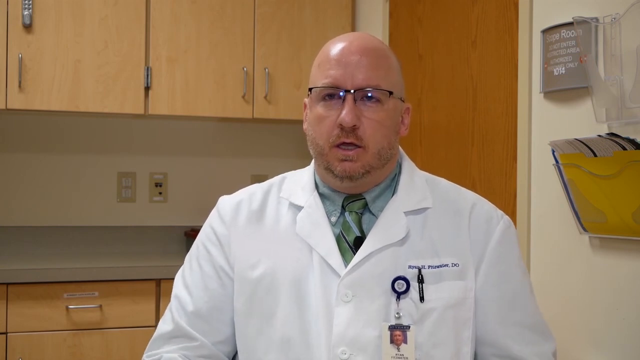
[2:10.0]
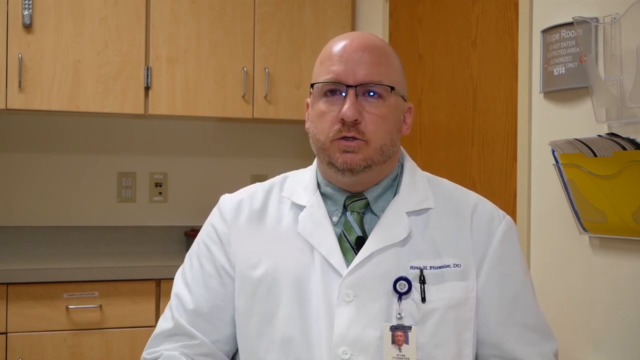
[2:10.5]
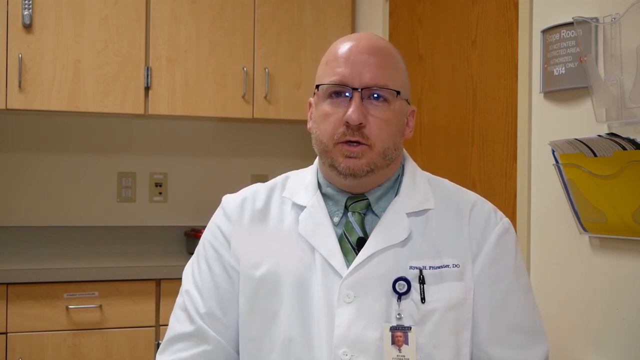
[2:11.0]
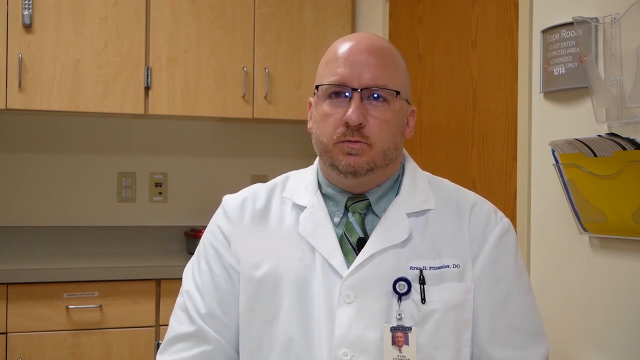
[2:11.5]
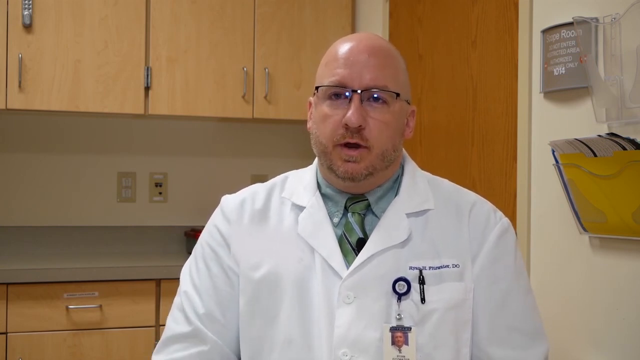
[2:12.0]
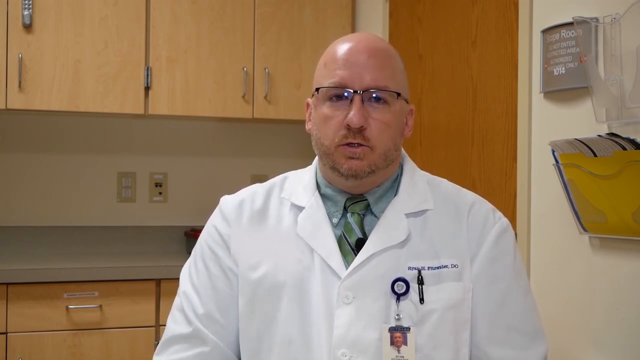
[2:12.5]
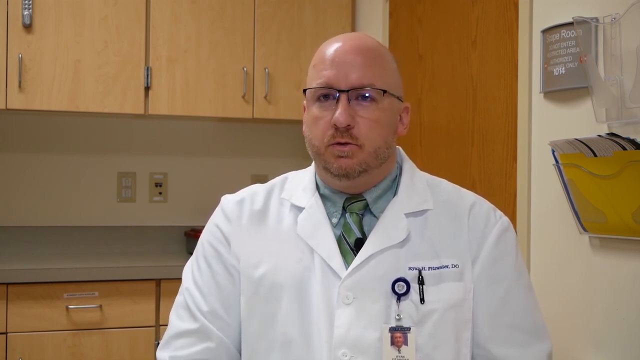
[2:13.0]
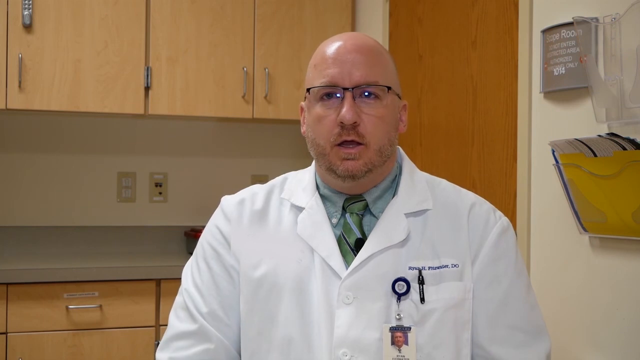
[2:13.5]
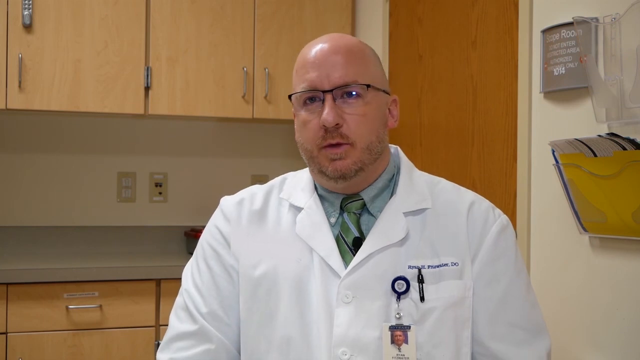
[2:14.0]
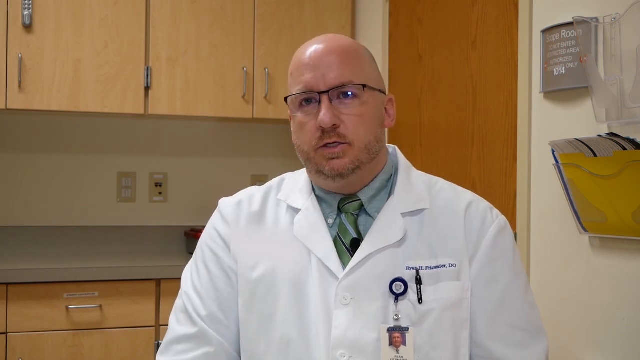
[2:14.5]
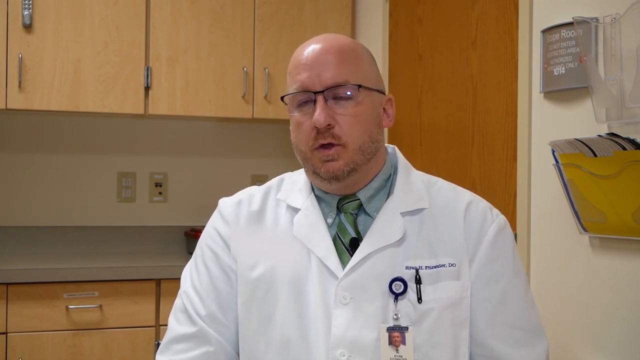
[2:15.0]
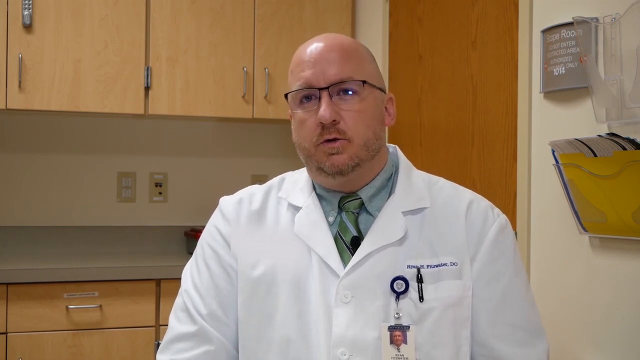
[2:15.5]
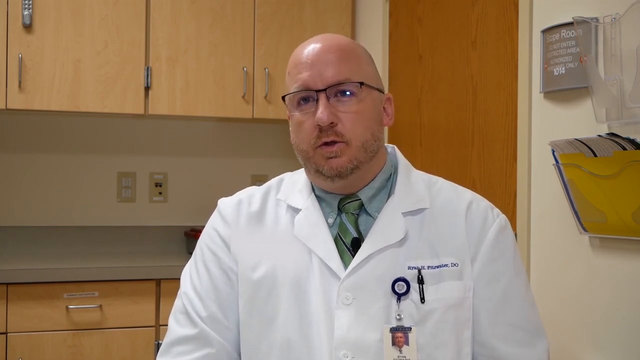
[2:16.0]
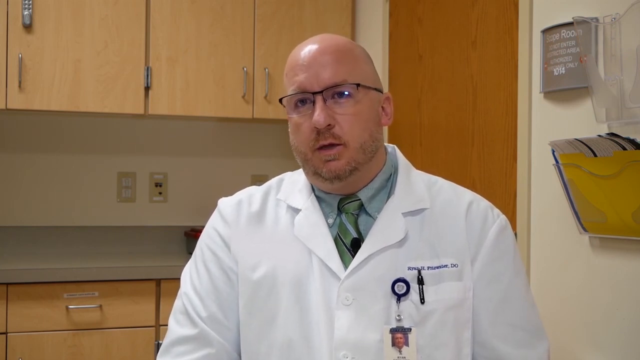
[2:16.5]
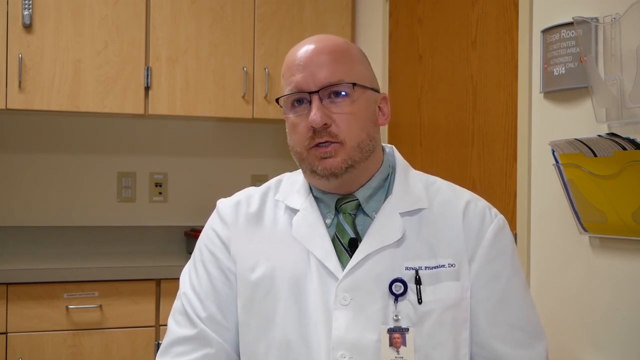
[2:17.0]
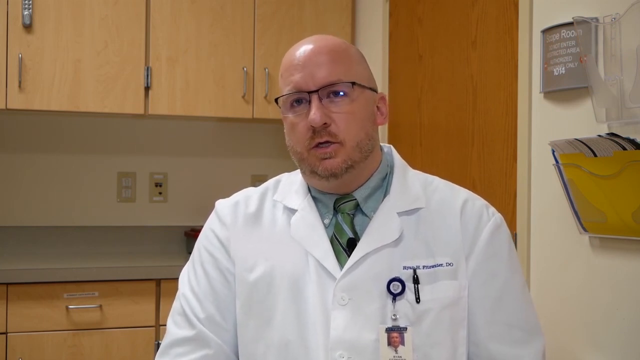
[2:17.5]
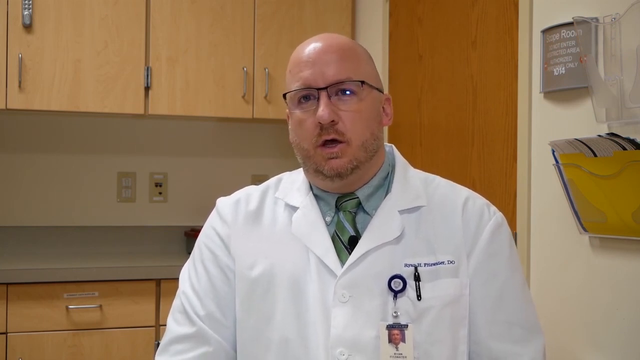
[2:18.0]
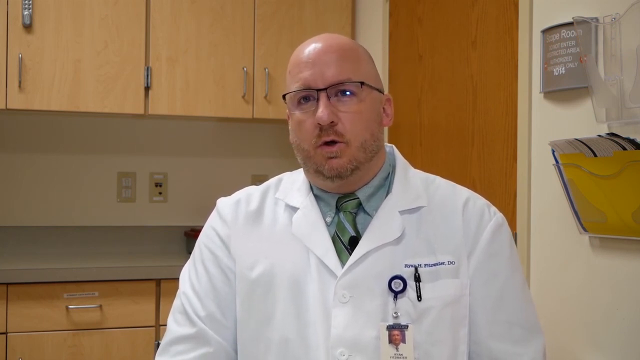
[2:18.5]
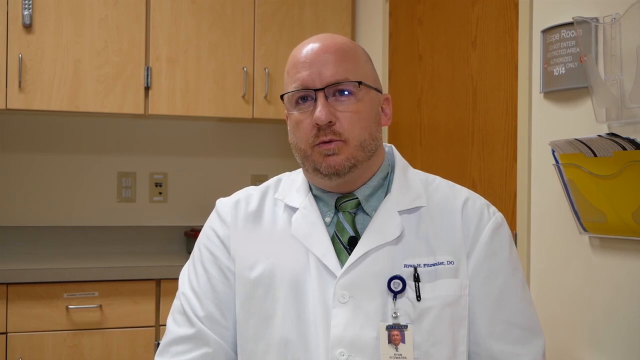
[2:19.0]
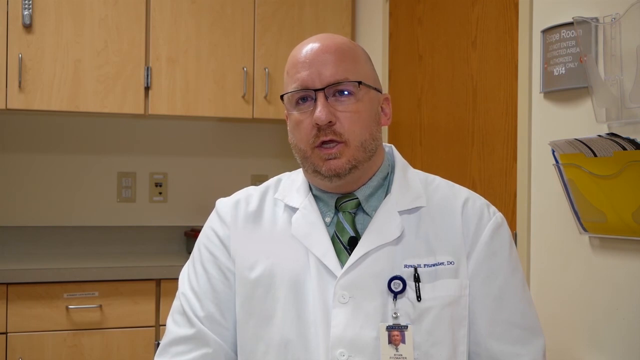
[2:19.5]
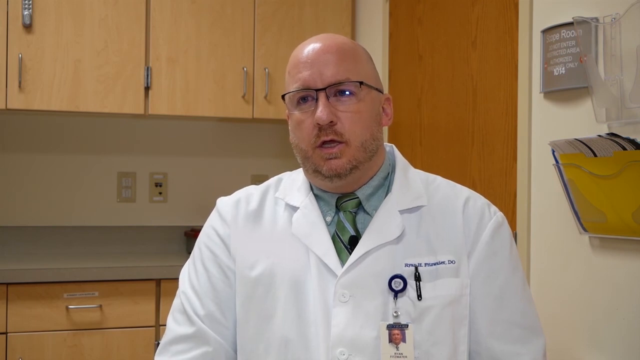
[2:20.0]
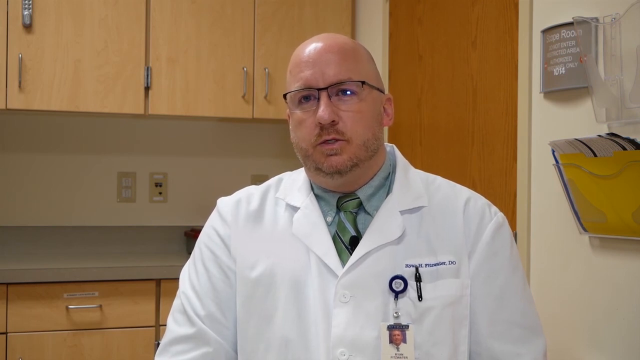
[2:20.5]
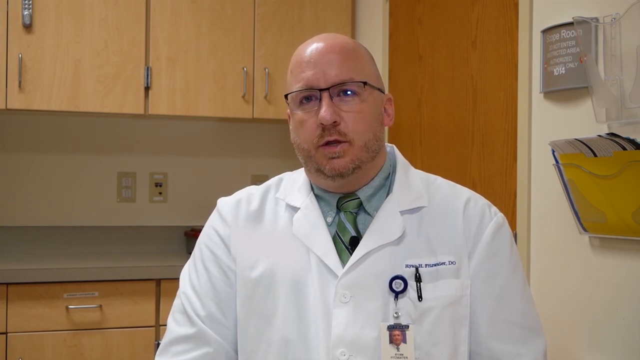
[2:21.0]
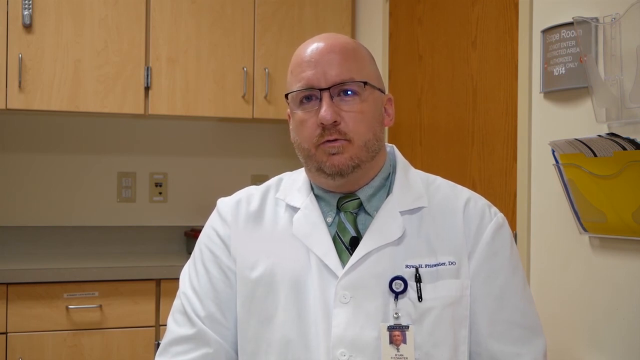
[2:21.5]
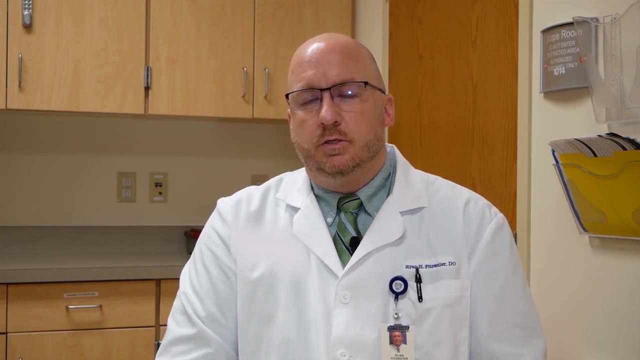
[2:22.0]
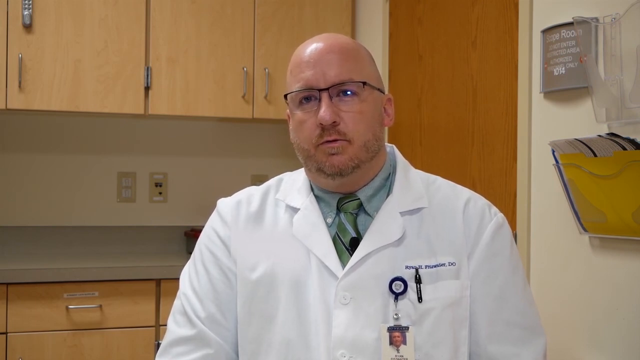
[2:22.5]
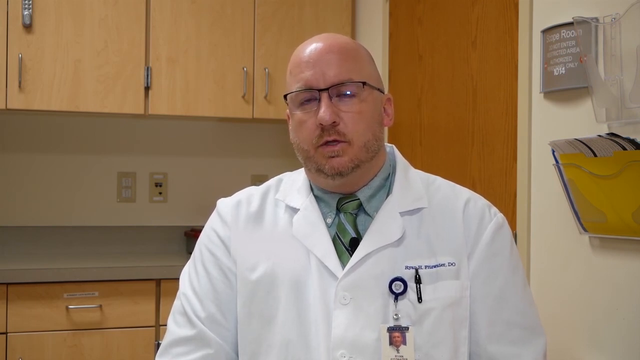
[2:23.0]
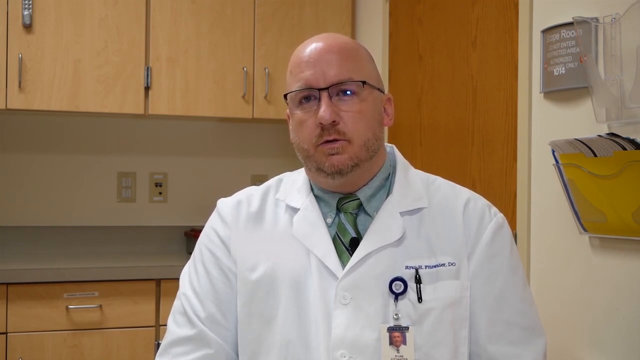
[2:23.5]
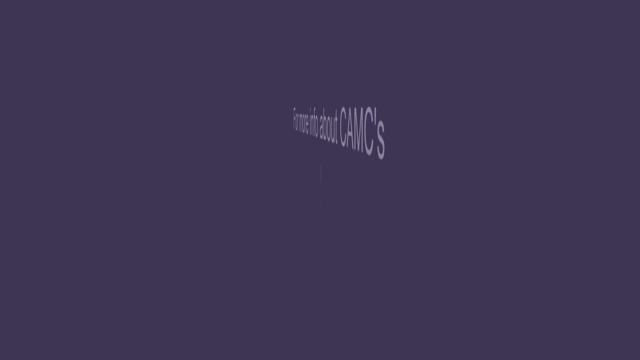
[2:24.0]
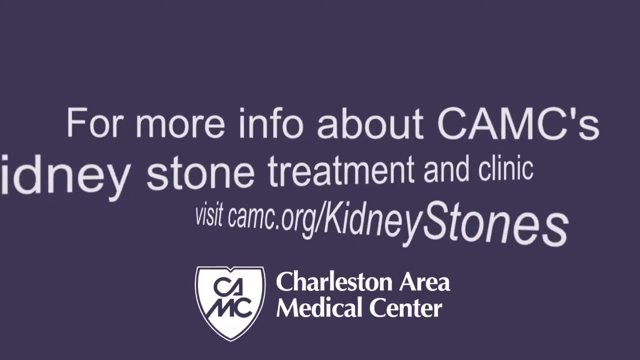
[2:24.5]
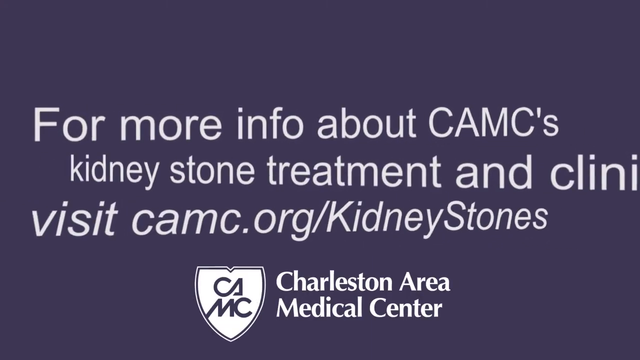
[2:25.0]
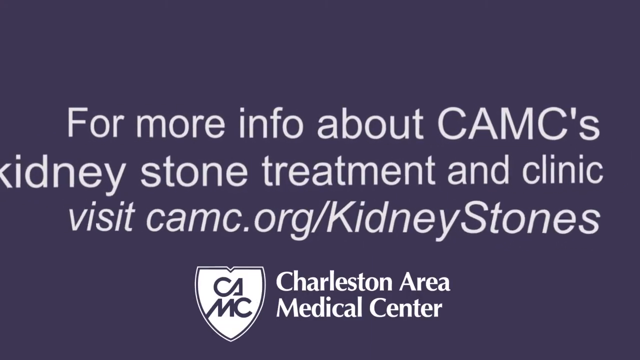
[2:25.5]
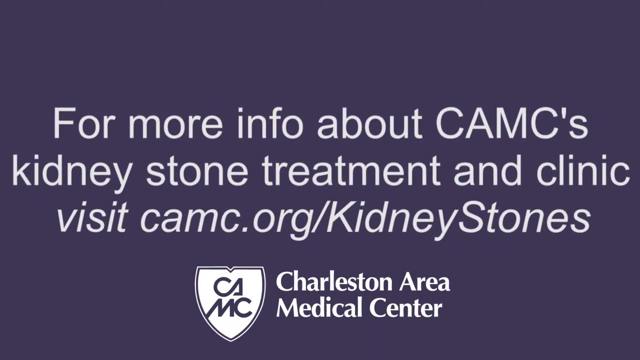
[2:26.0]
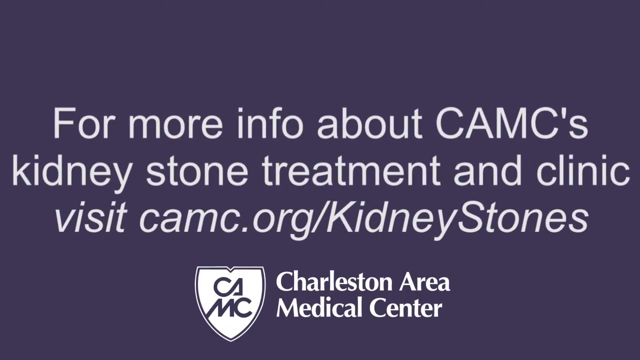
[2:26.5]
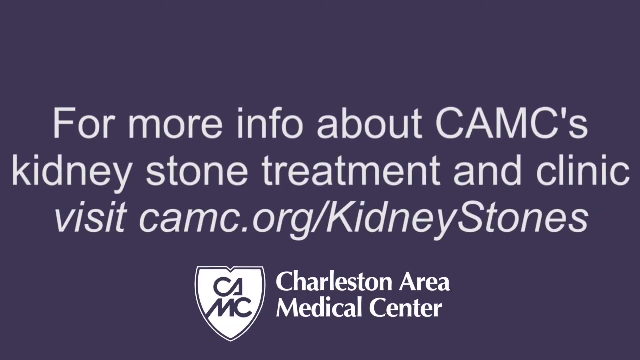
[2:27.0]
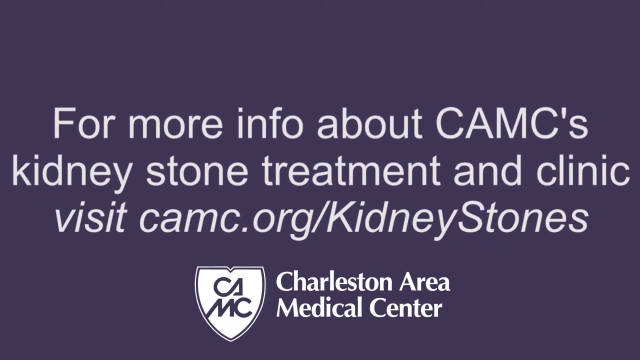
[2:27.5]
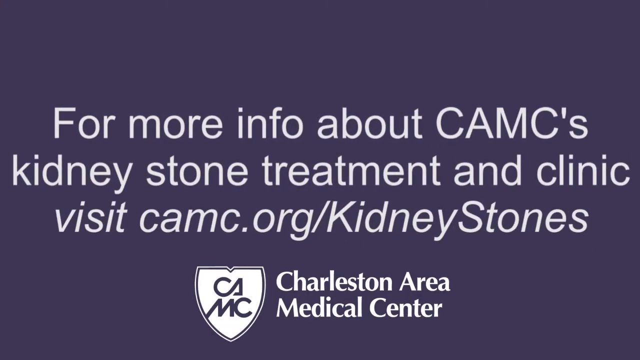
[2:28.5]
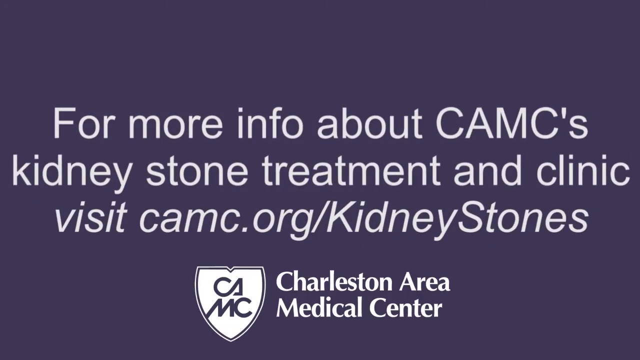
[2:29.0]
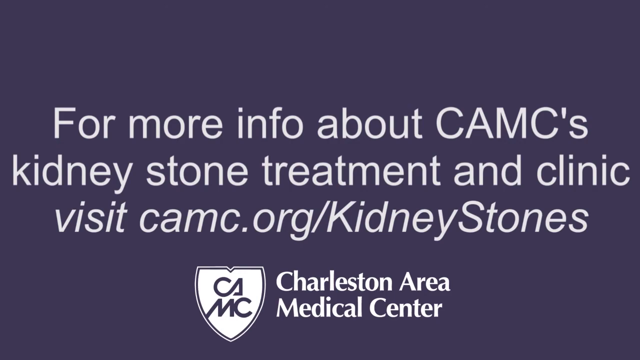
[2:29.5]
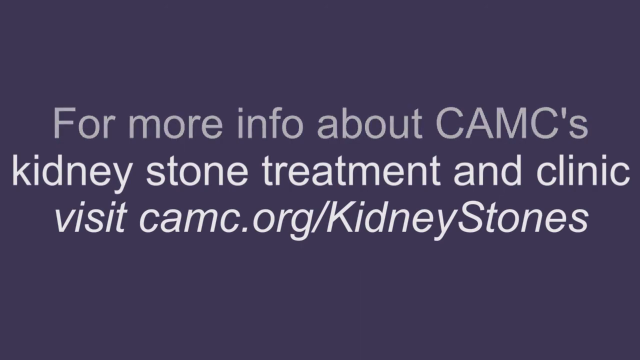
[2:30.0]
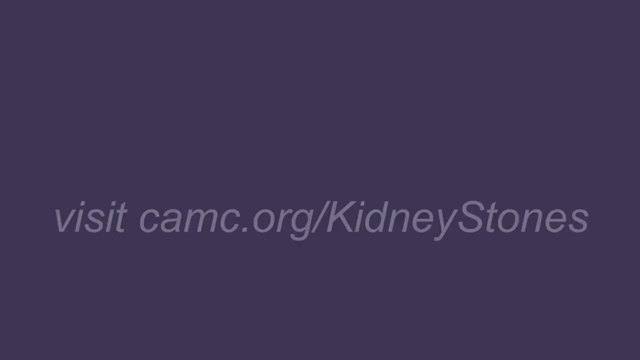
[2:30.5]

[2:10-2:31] The doctor continues to talk, moving his head as if nodding sideways, his mouth moving. He wears a white lab coat and is sitting down. The scene then changes to a light purple background with large white captions in the middle that read "For more information about CAMC's kidney stone treatment and clinics, visit camc.org kidney stones". At the bottom is the hospital's logo with the words "Charleston Area Medical Center". The logo looks like a white shield in the middle with the letters CAMC, CA on top and MC on the bottom. All the words disappear, and at the end the words "Visit camc.org kidney stones" are displayed faintly.